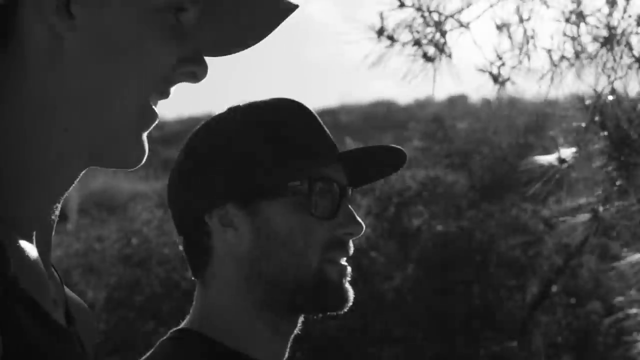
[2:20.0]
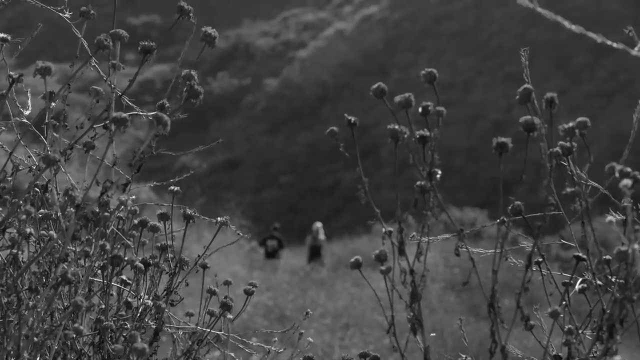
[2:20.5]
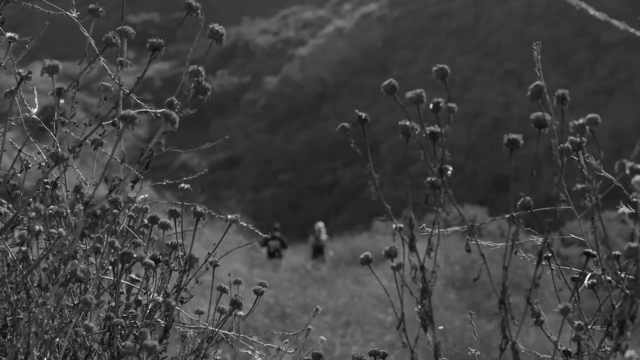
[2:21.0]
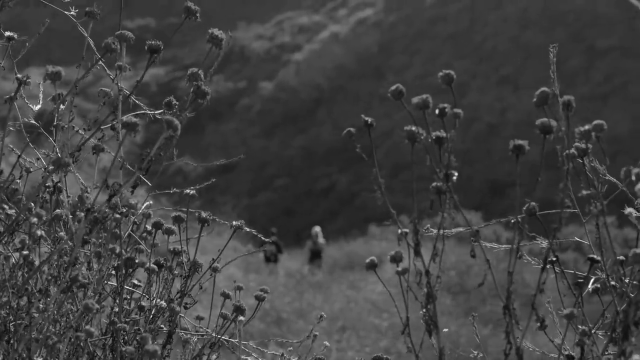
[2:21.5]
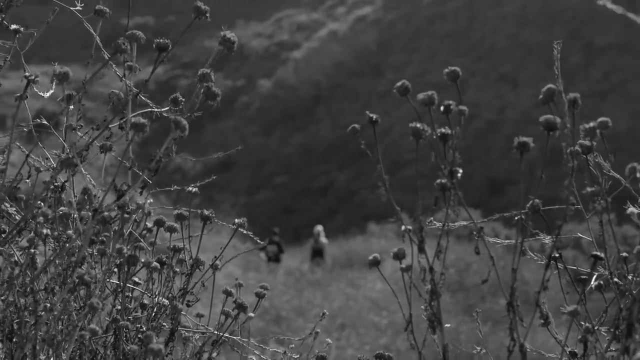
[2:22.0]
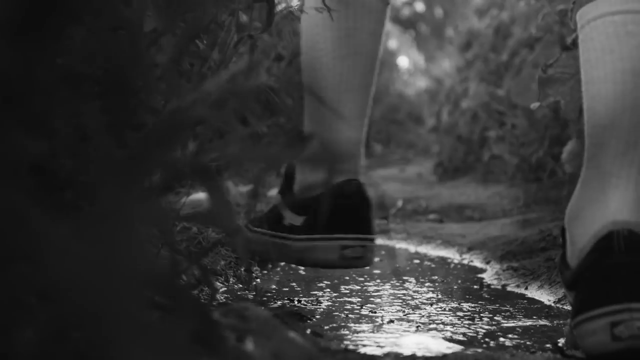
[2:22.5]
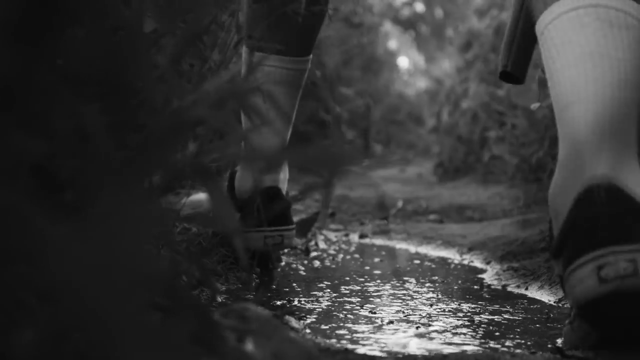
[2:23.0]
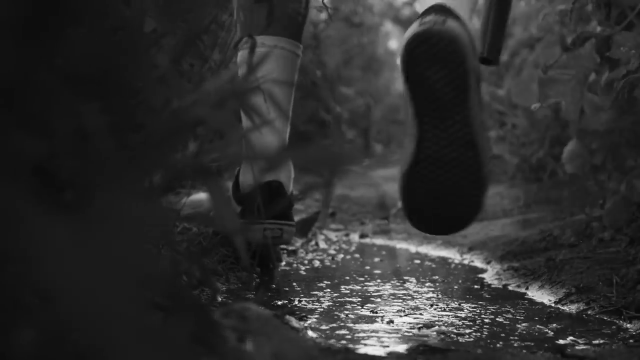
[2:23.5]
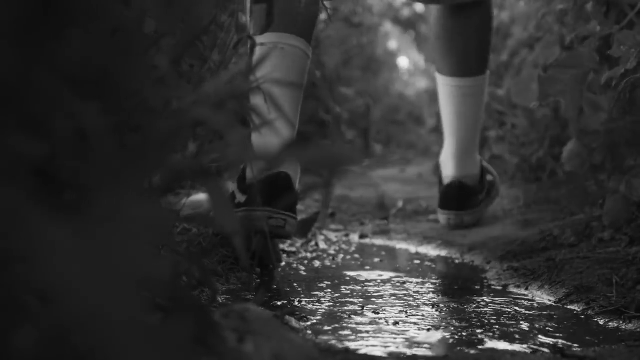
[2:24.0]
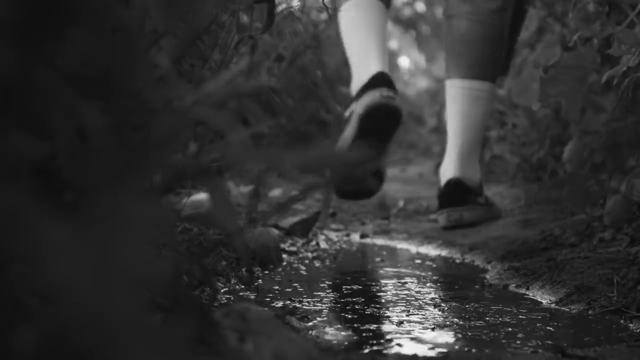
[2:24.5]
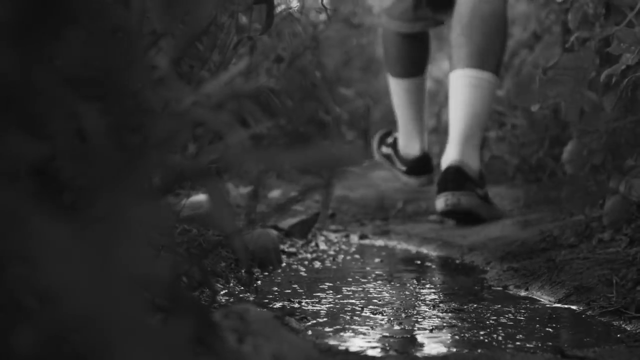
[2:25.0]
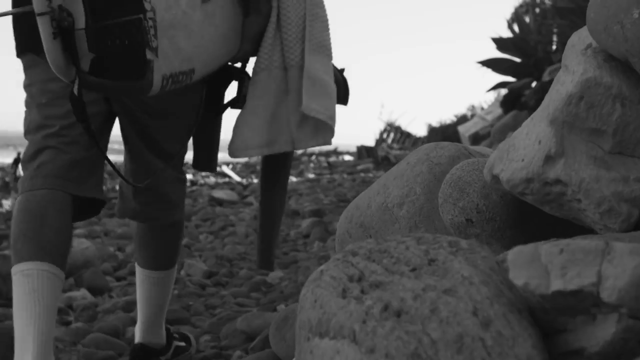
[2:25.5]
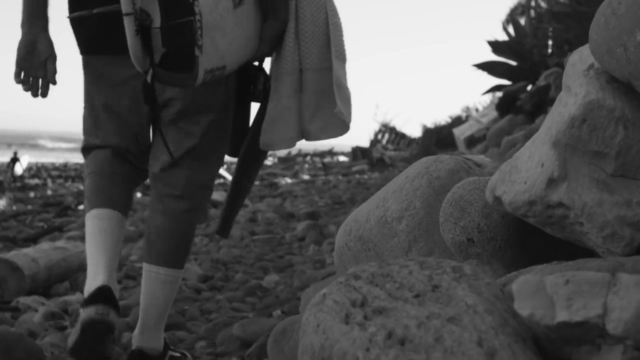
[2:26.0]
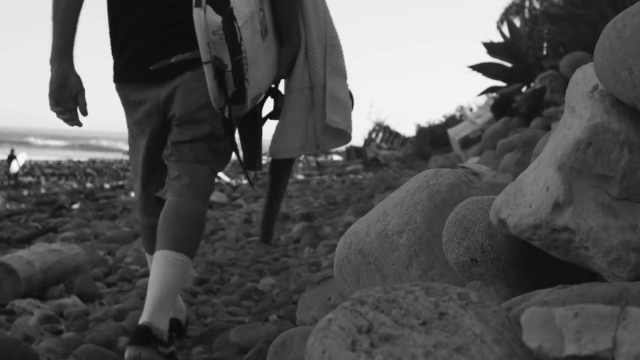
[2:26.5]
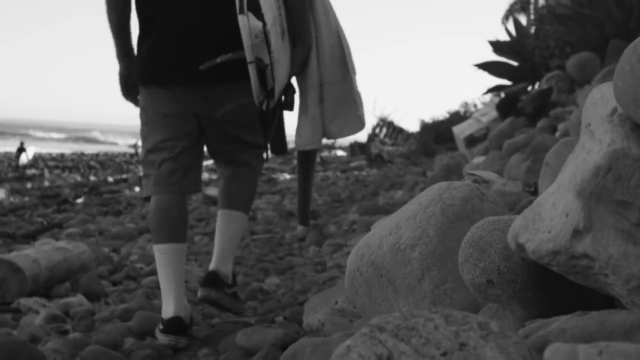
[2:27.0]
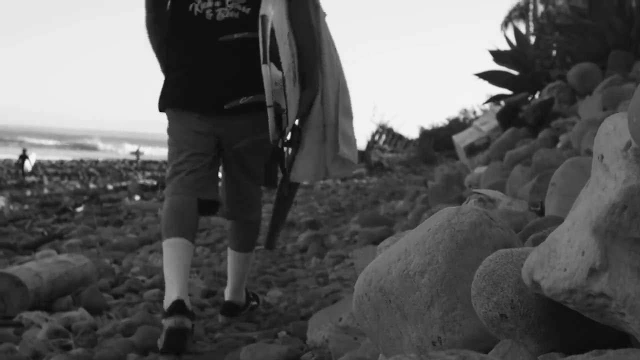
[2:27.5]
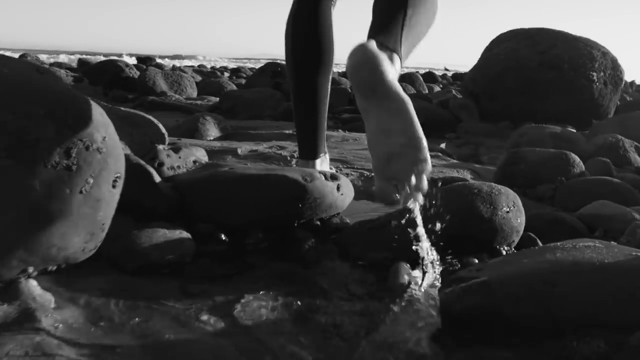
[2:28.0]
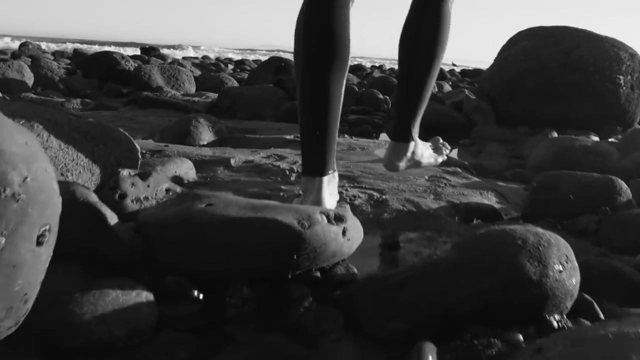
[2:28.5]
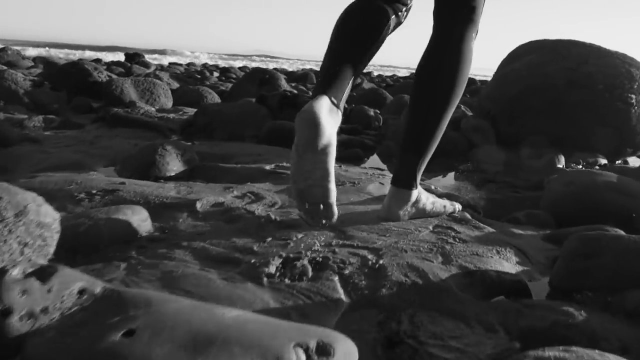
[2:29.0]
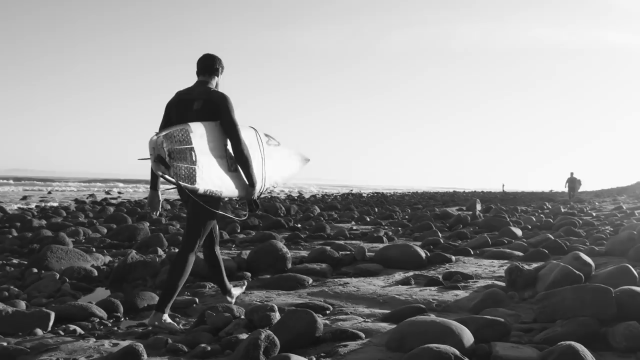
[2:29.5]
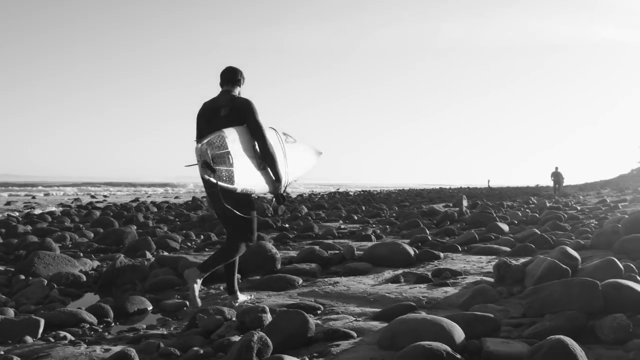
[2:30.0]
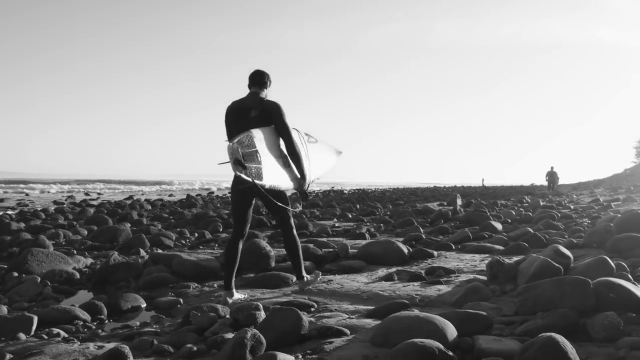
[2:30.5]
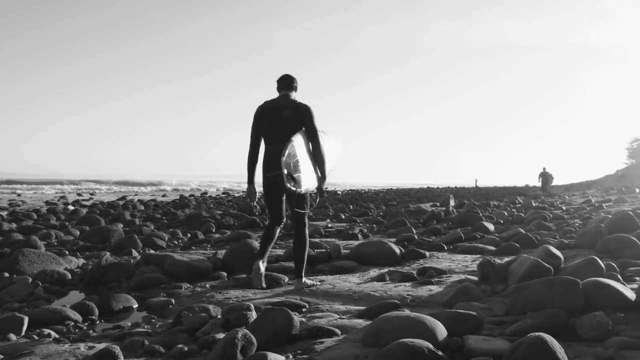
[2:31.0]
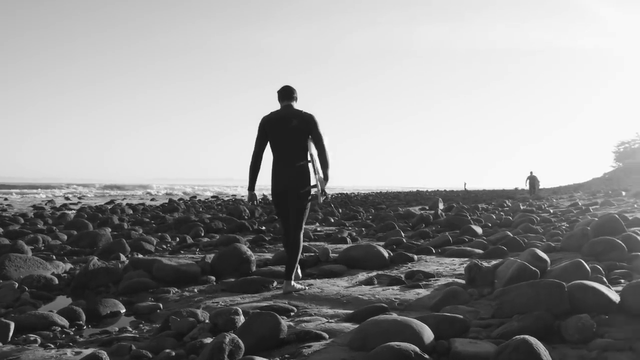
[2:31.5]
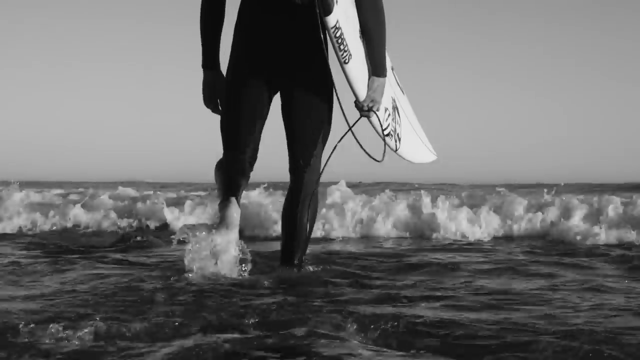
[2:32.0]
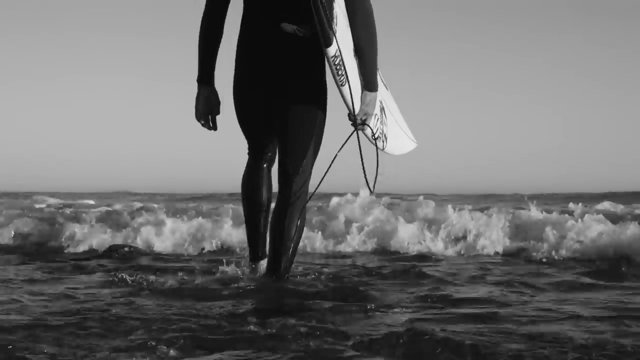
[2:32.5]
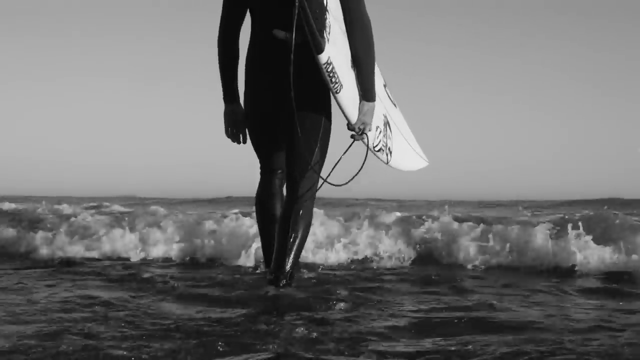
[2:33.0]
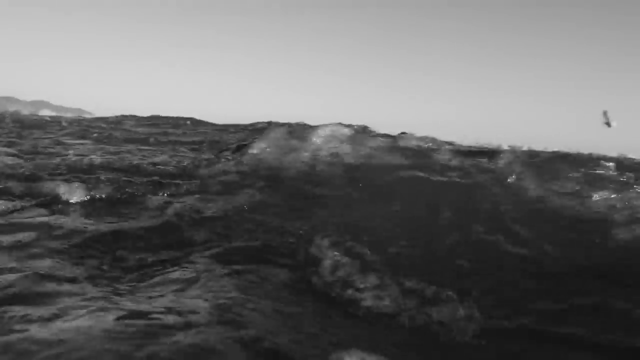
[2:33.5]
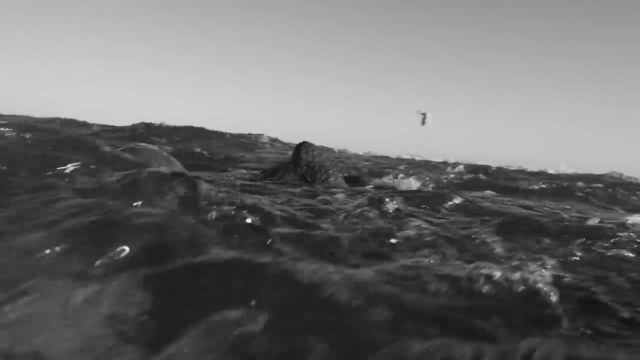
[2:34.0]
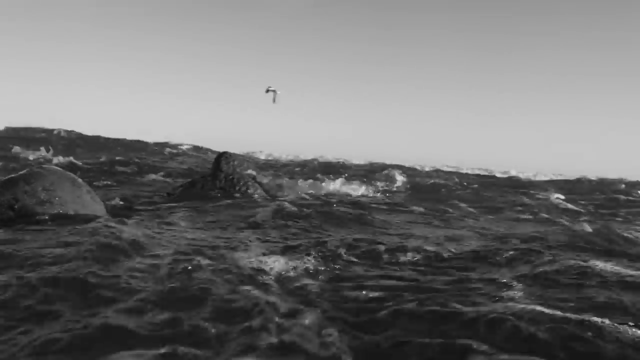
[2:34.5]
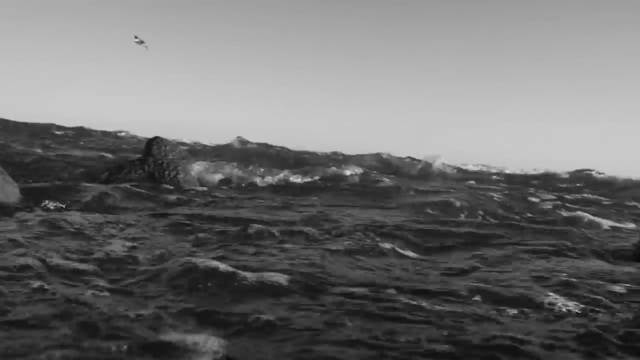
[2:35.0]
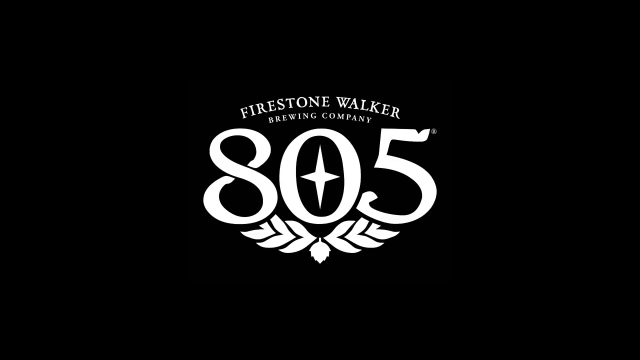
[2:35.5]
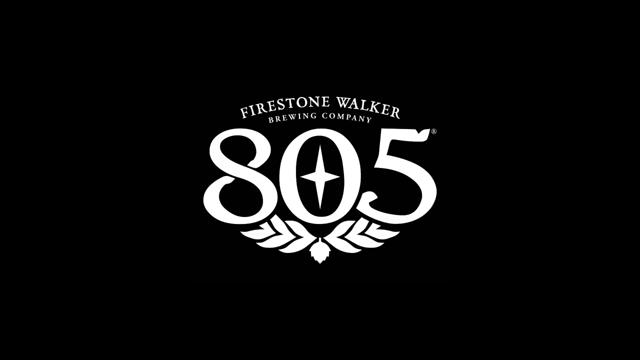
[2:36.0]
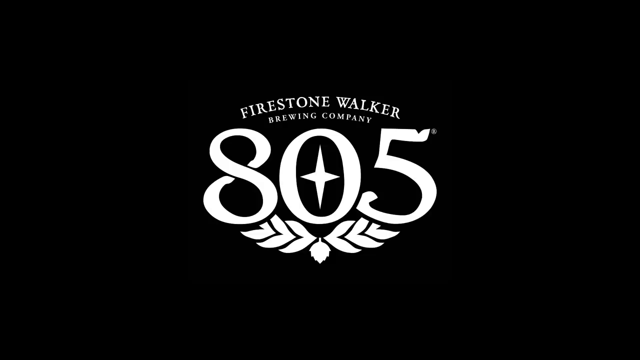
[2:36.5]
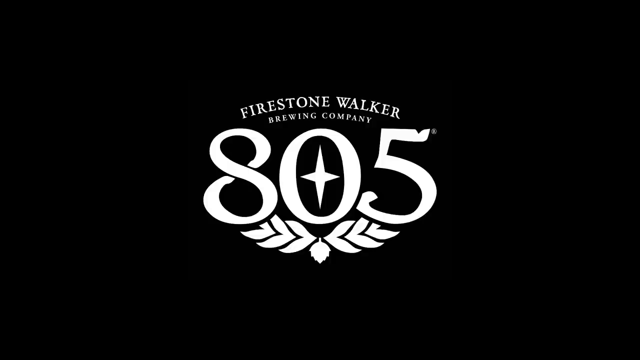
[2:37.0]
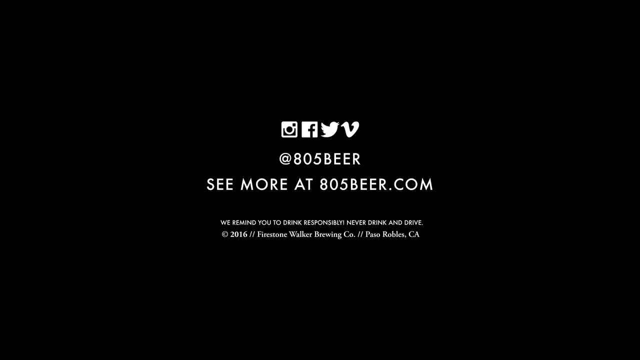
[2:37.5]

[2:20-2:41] A male and a female walk along the side of a hill with trees and bushes in the background and the sun off to the right. The man wears a black baseball cap and sunglasses, is unshaven for a few days, and has short hair. A new scene, seen from a distance through plants, shows the male and female walking along a trail in a valley. A ground-level shot shows the man in Vans sneakers and white socks up to his calf walking along a trail filled with water, stepping up and over the water. They walk along a rocky shore with him carrying a surfboard. He has switched from his shorts and sneakers into a surfing wetsuit with no shoes and walks along a very rocky shore with other surfers ahead of him. He walks into the water ankle deep, then calf deep. Rocks along the shore and a flying seagull appear. The video ends with the 805 Beer logo: "Firestone Walker," below it "Brewing Company," and below that "805," with a symbol inside the zero that looks like a plus sign, a four-pointed star, and below that a plant with some leaves.